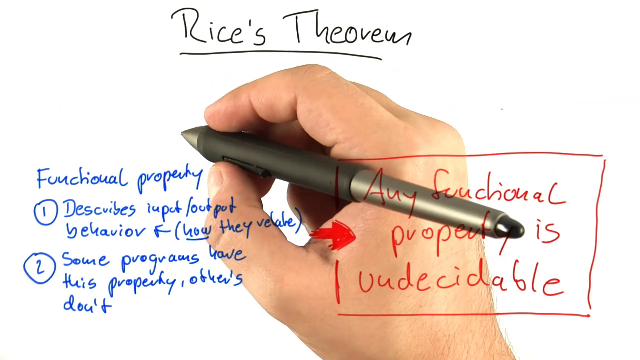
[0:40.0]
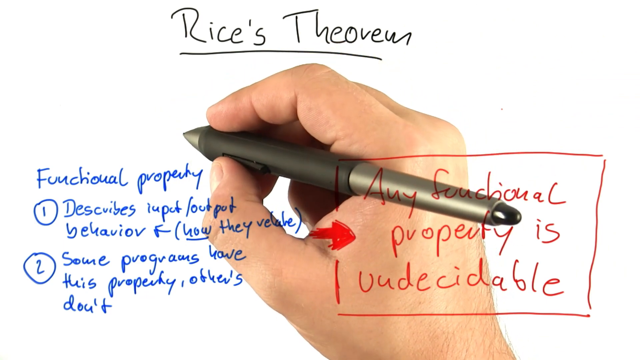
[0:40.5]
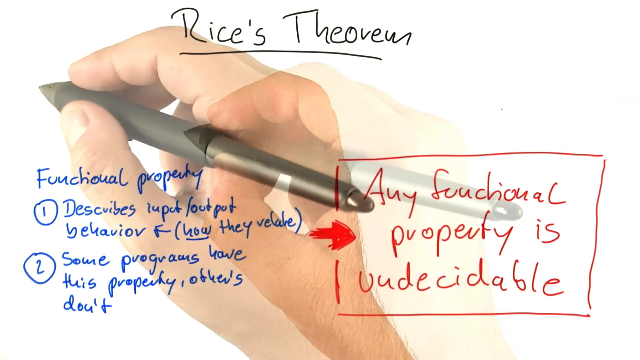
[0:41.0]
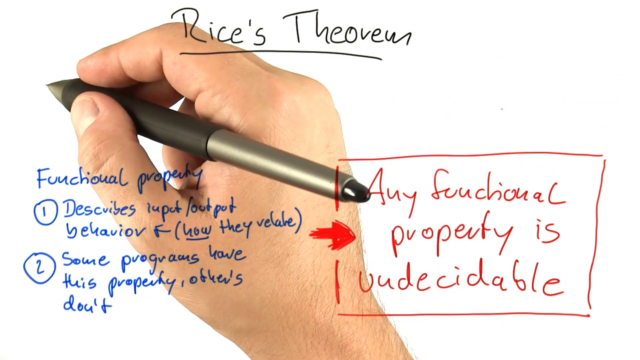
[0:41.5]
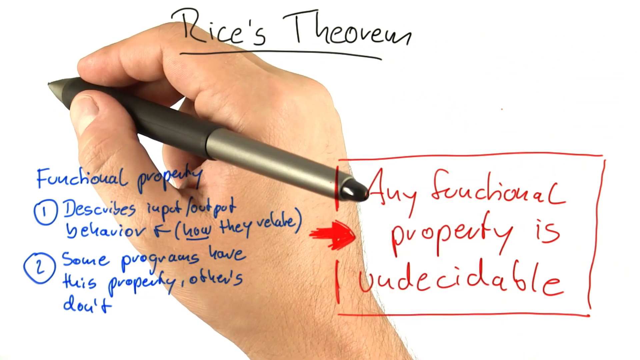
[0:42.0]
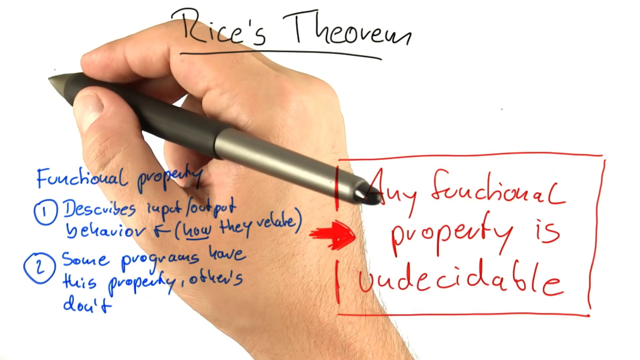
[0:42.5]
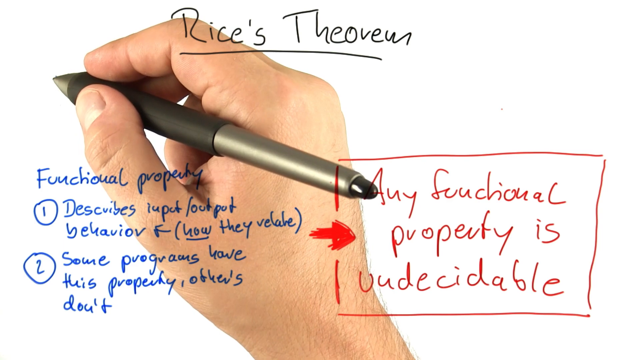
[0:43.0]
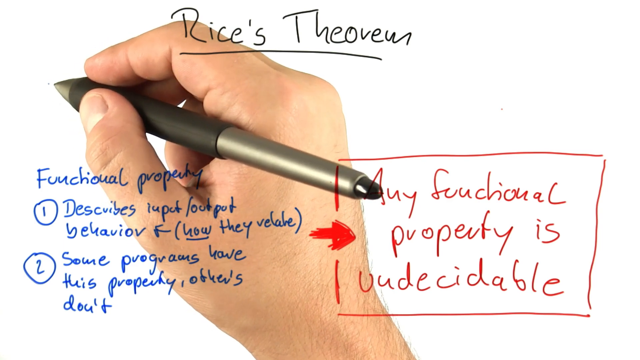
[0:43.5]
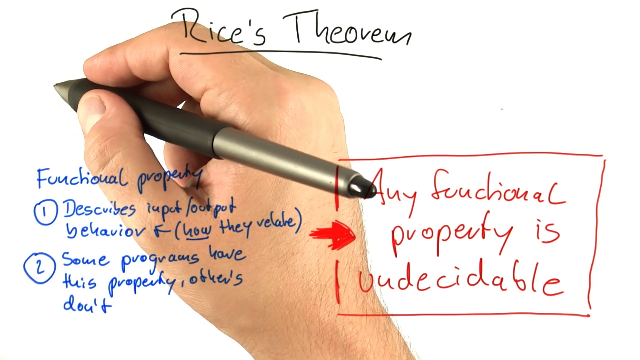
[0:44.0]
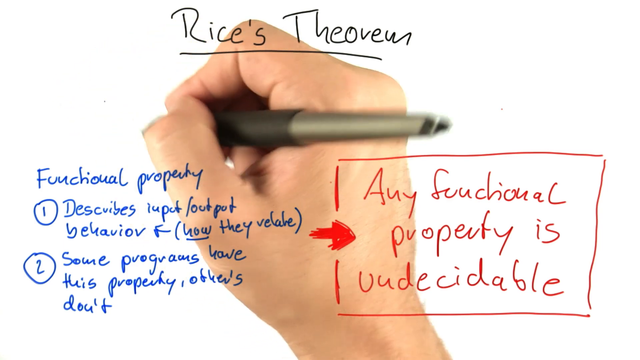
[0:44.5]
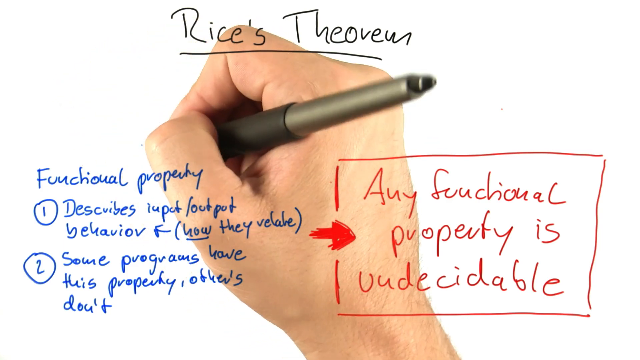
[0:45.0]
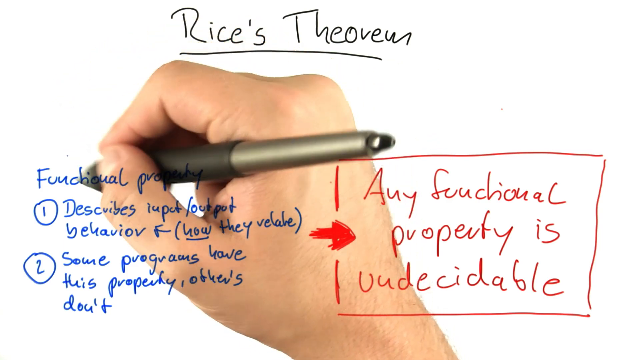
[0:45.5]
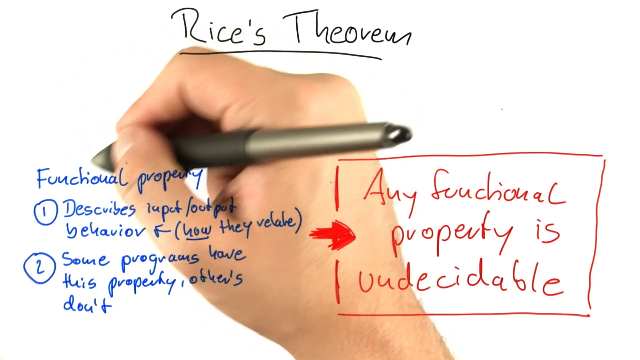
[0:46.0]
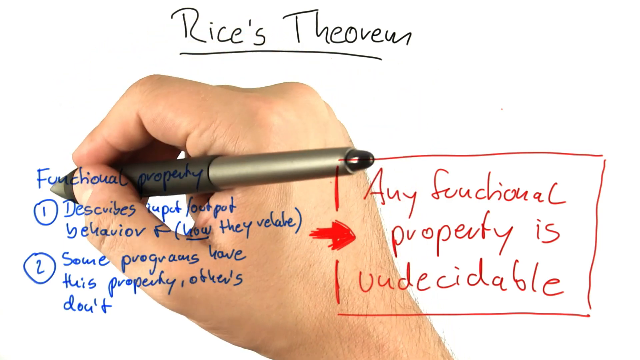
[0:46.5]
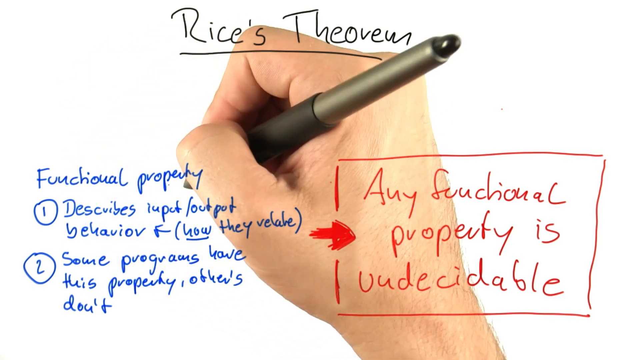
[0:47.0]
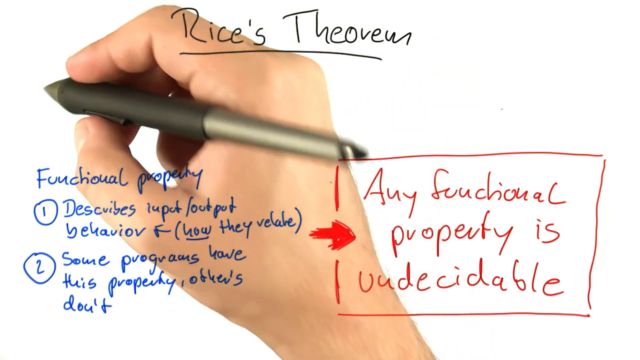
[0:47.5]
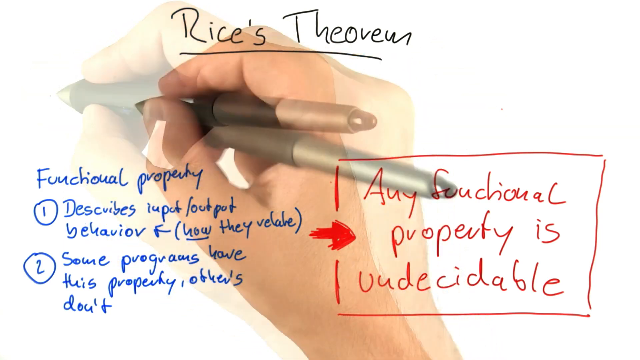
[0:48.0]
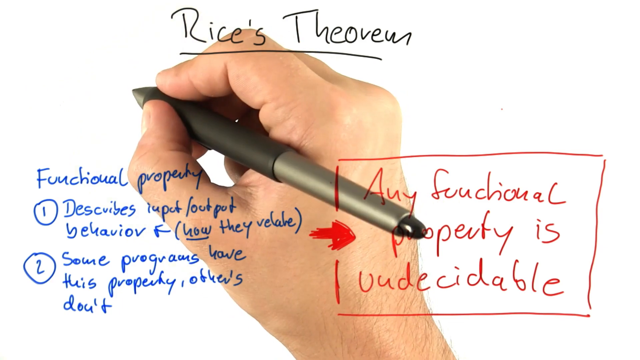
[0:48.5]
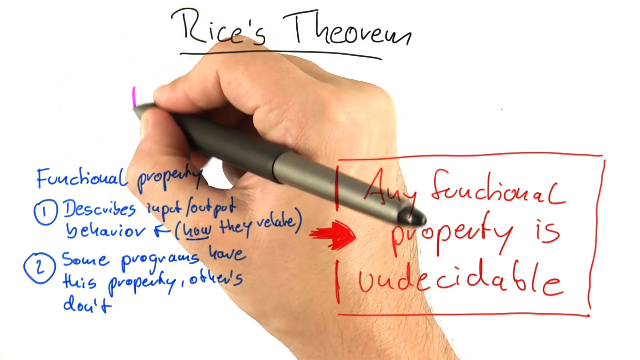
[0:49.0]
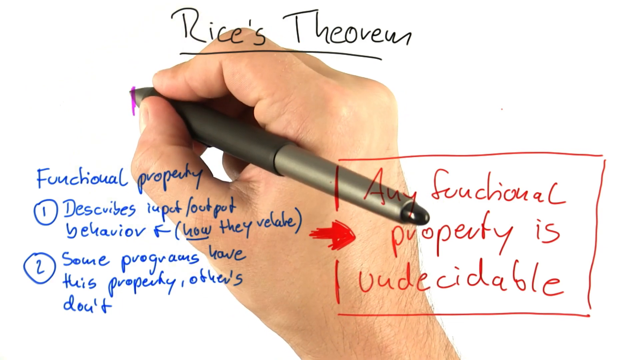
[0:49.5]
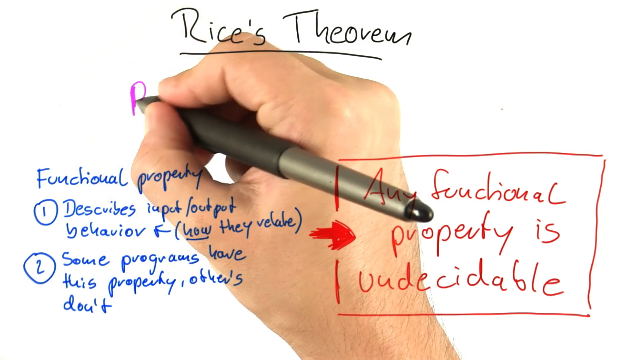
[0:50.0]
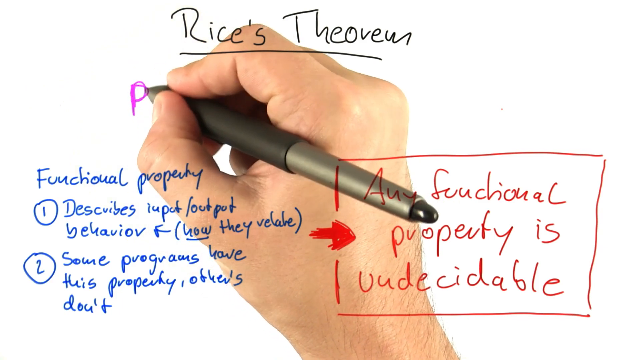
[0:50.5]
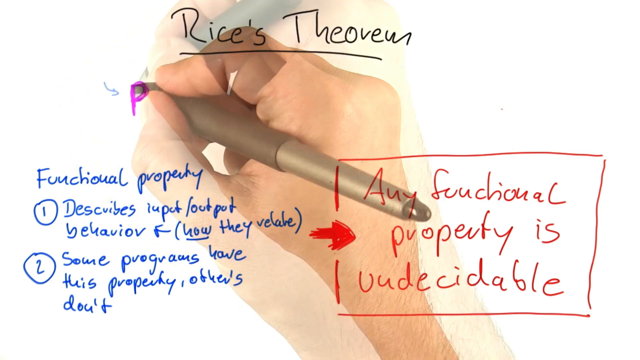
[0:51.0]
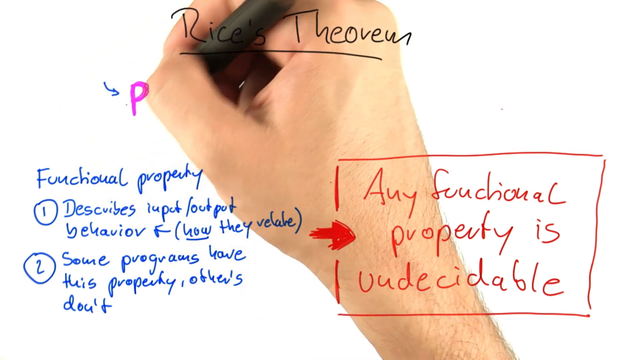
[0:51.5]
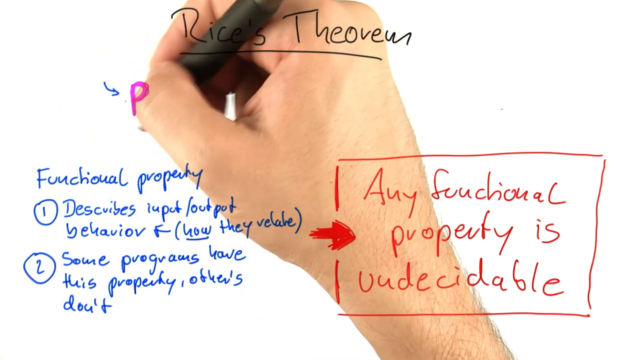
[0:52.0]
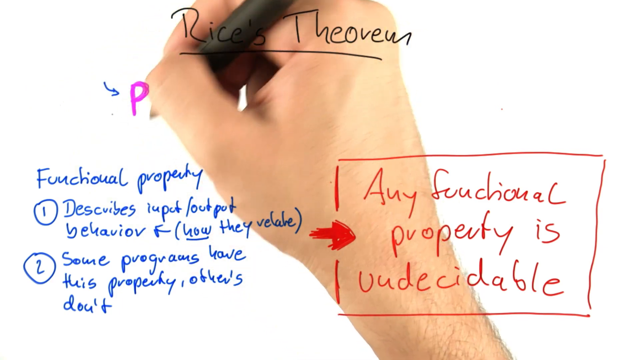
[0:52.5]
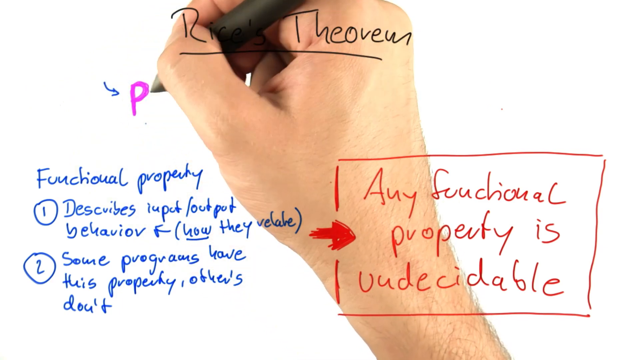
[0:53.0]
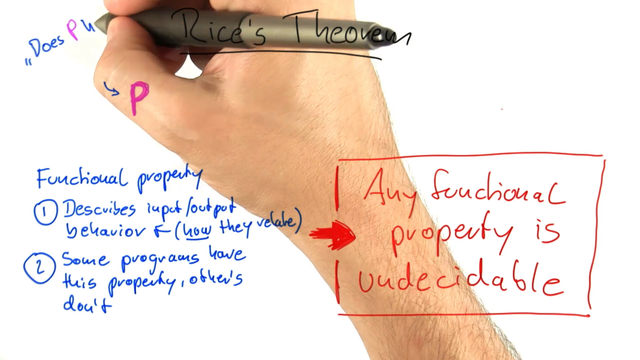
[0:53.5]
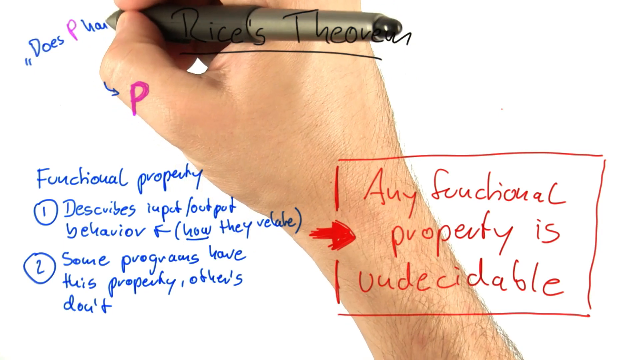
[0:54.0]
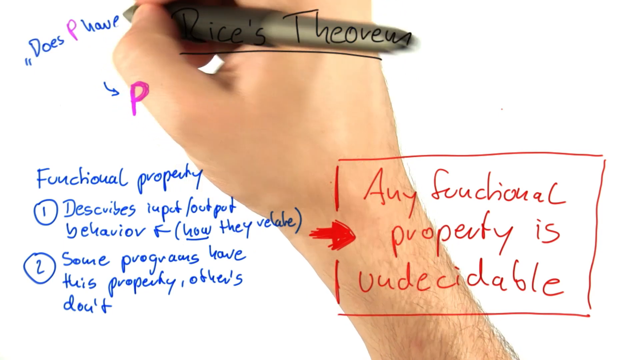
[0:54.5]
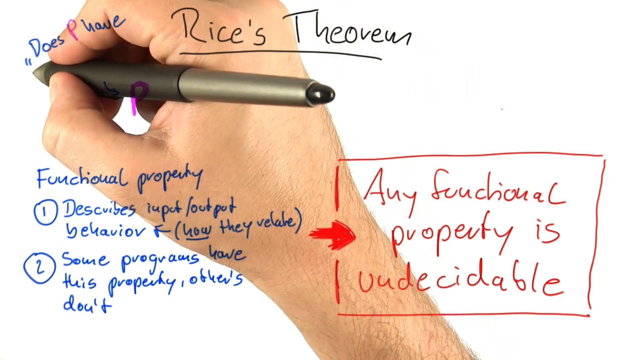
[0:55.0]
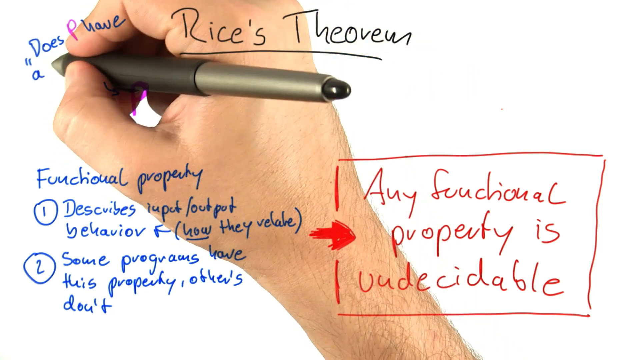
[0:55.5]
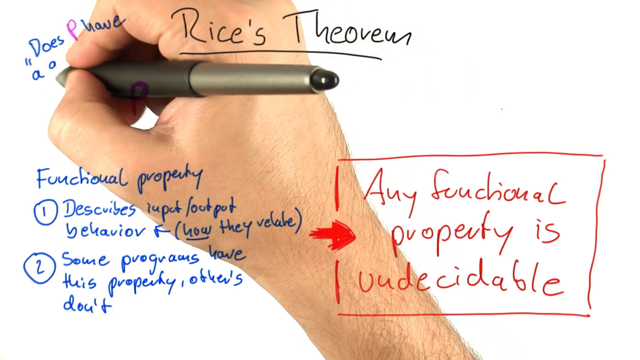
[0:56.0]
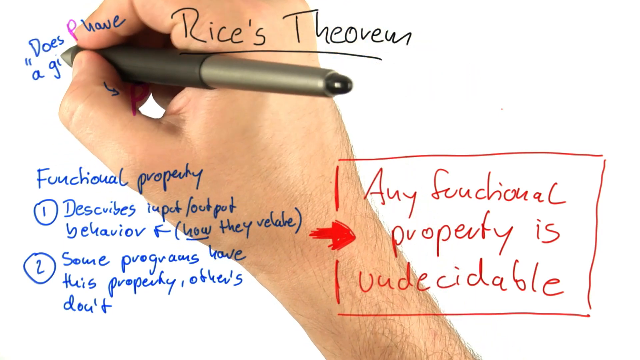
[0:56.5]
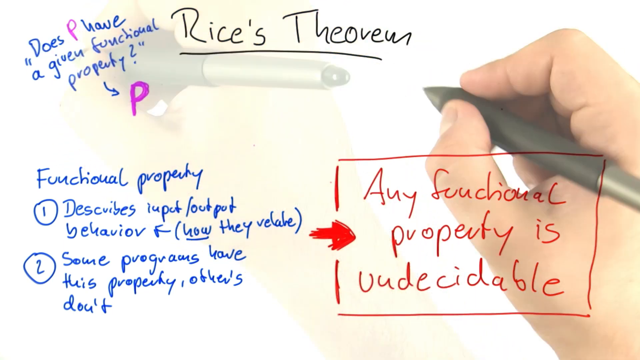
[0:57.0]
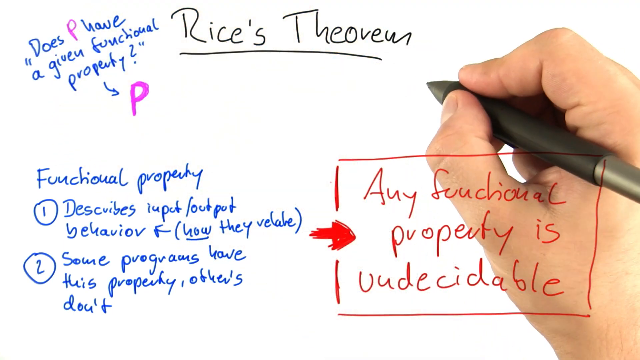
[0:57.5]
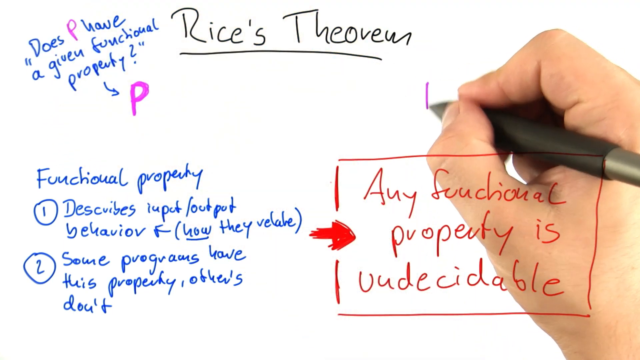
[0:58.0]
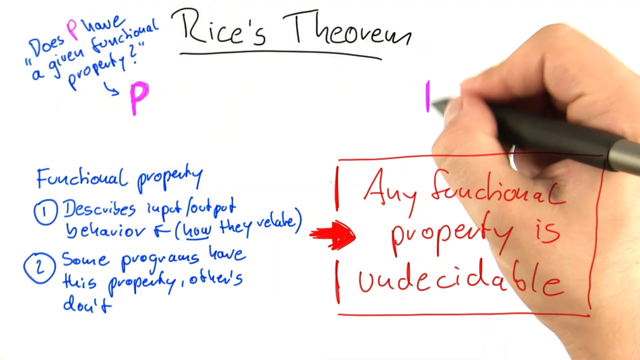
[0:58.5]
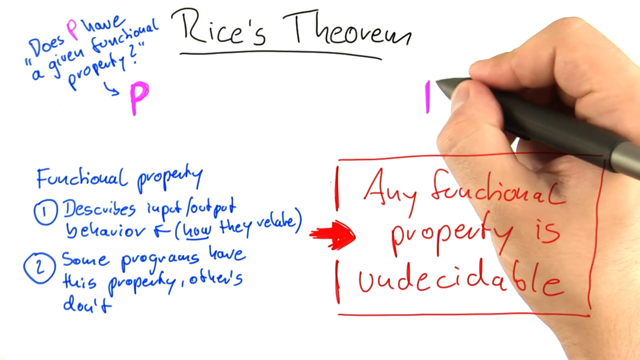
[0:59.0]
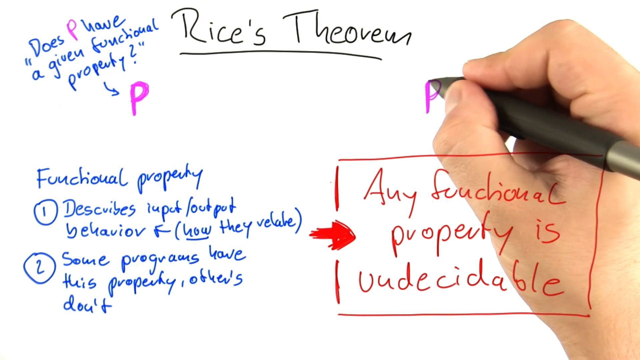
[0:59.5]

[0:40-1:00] A man's hand holds a pen below black text at the top that says "Rice's Theorem." Blue text says "Functional Property 1 describes input-output behavior, how they relate, and 2 some programs have this property and others don't." A red box says "any functional property is undecidable," with a red arrow pointing to it. The person gets ready to write but kind of glides their hand over the screen without writing. They then begin writing a bold purple letter P with a green arrow pointing to it and kind of circle around it. Text in blue and purple in quotation marks reads "does P have a given functional property?" They then write on the right side, adding purple text that says "P..."